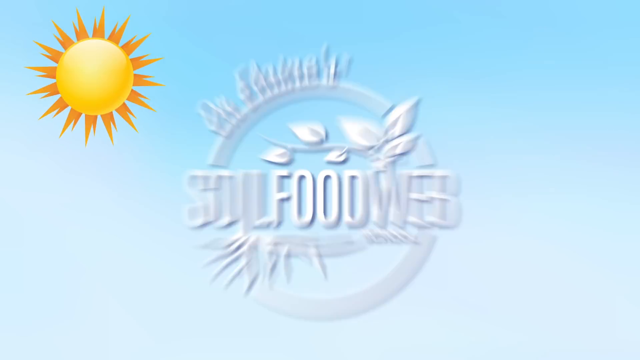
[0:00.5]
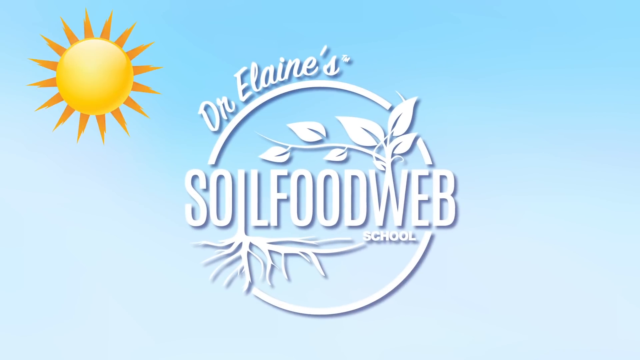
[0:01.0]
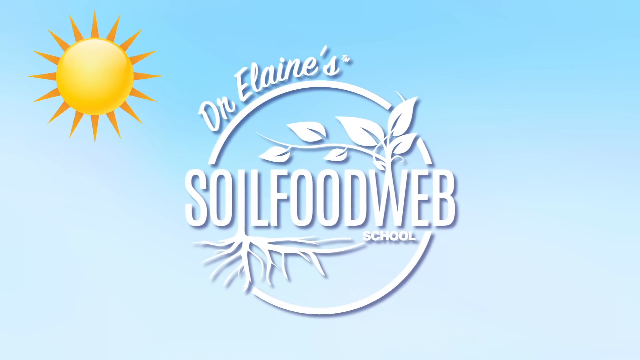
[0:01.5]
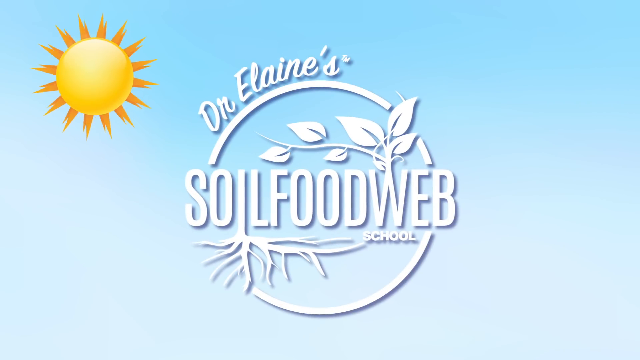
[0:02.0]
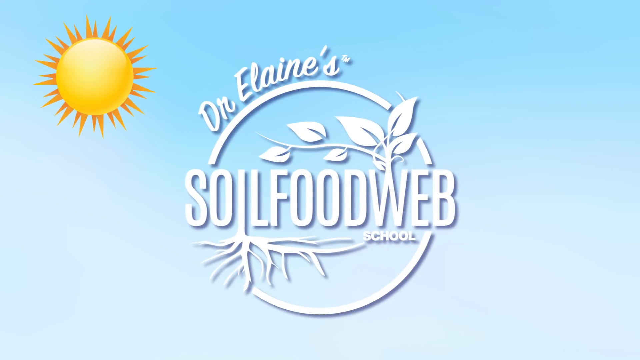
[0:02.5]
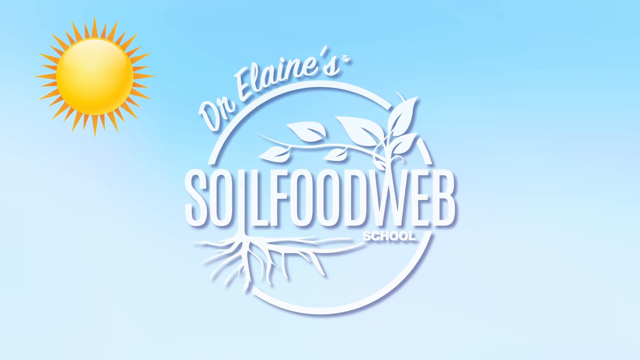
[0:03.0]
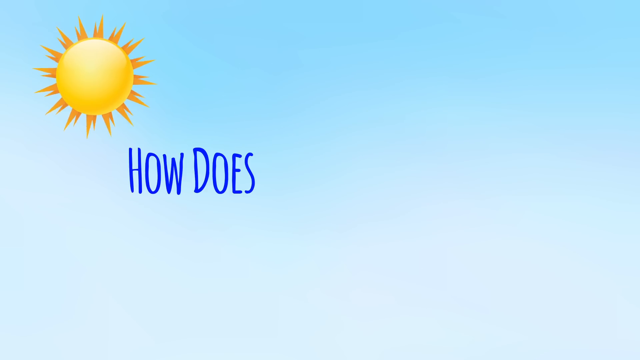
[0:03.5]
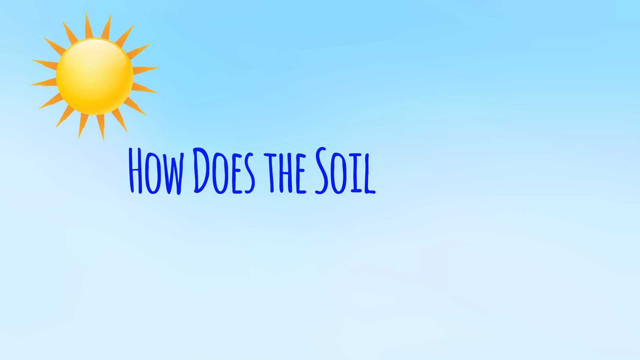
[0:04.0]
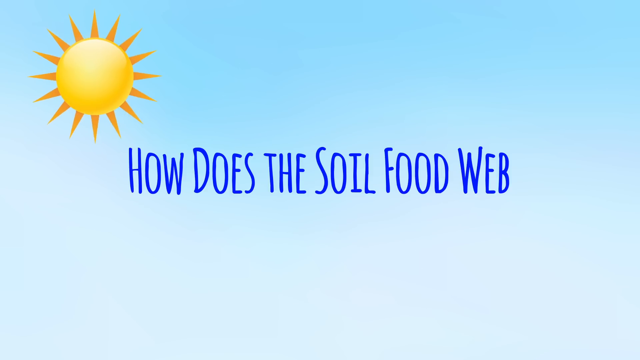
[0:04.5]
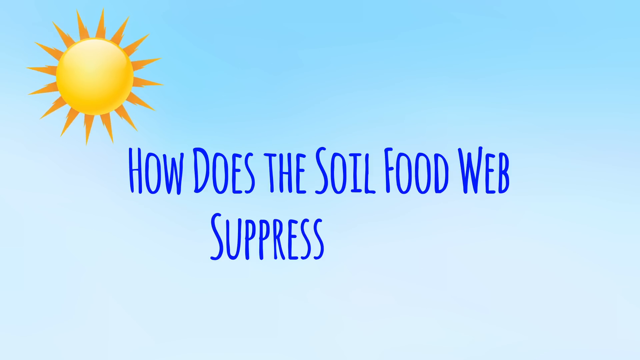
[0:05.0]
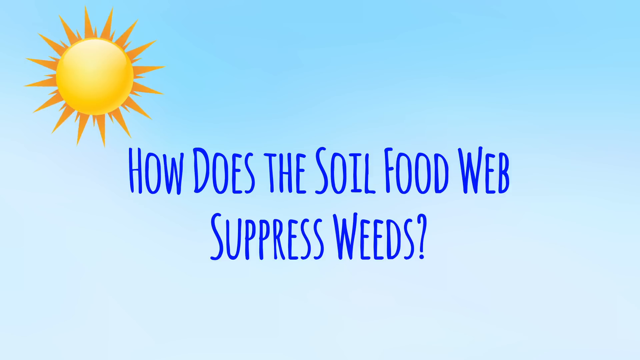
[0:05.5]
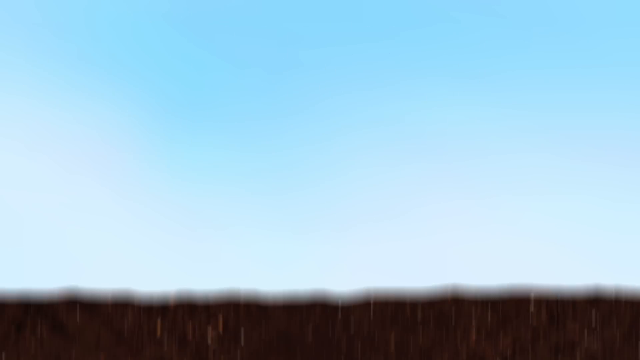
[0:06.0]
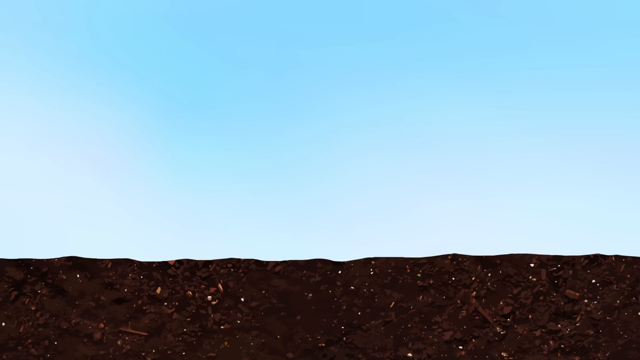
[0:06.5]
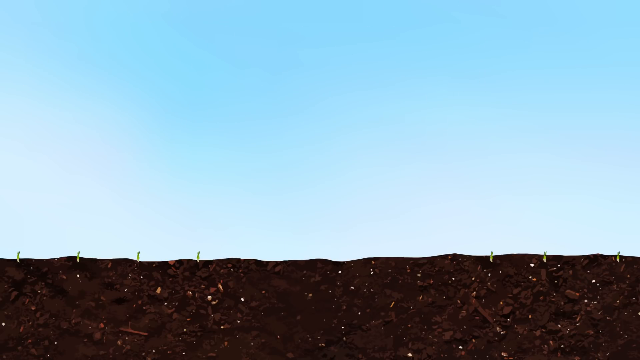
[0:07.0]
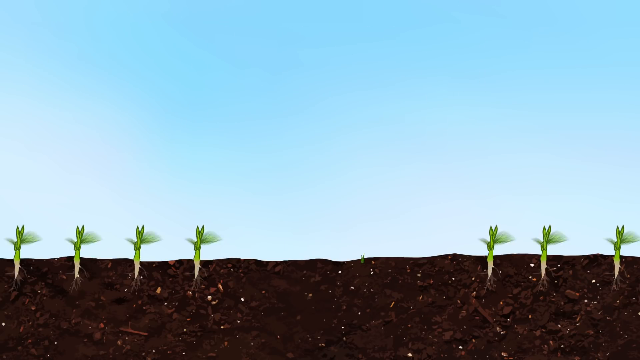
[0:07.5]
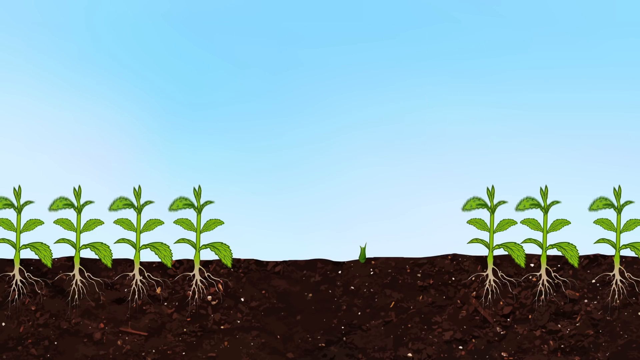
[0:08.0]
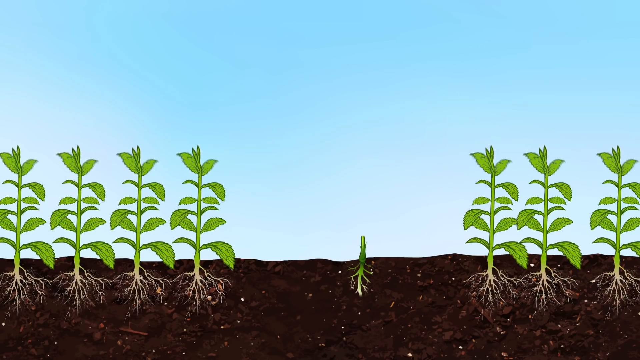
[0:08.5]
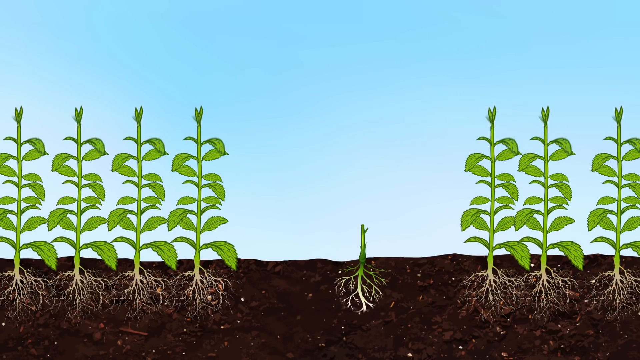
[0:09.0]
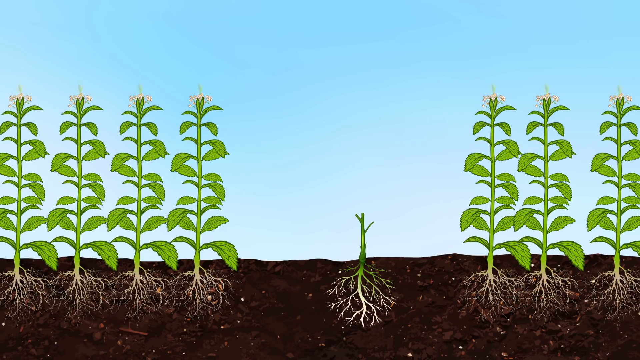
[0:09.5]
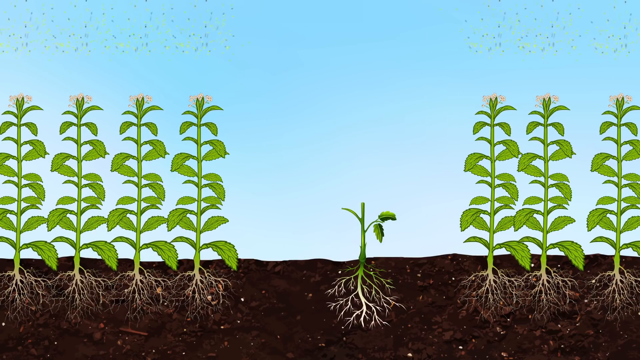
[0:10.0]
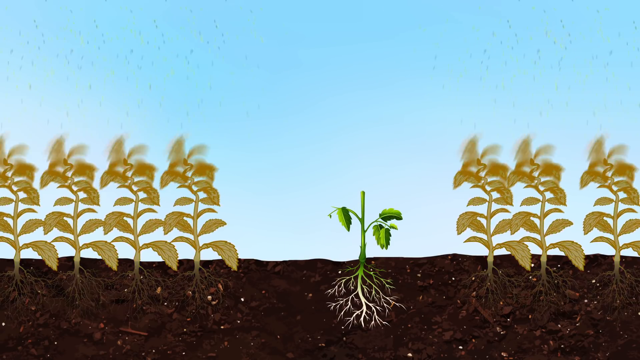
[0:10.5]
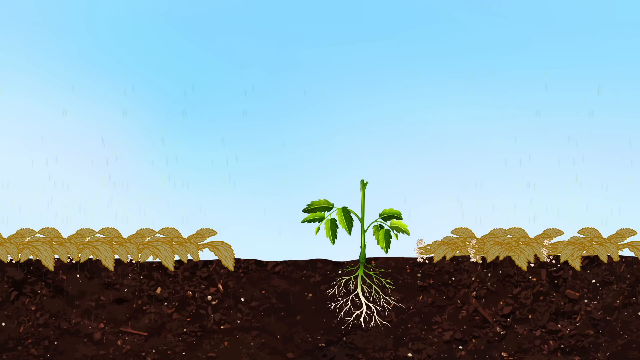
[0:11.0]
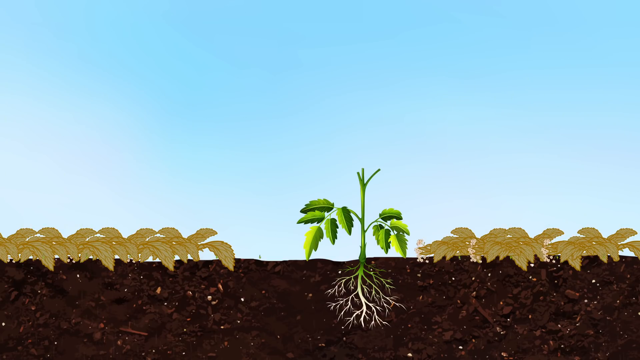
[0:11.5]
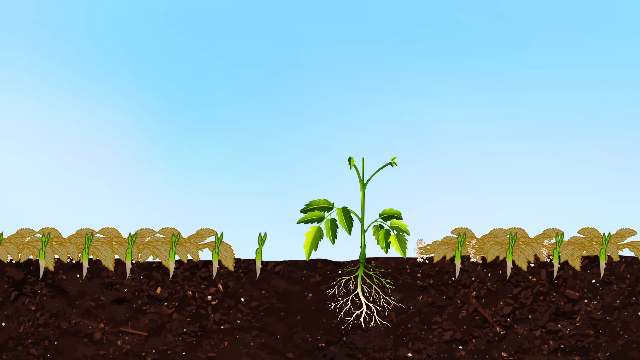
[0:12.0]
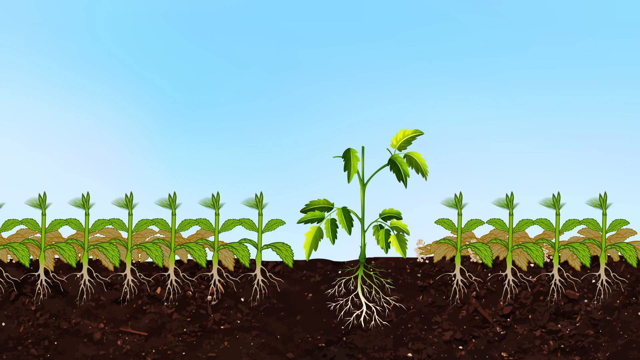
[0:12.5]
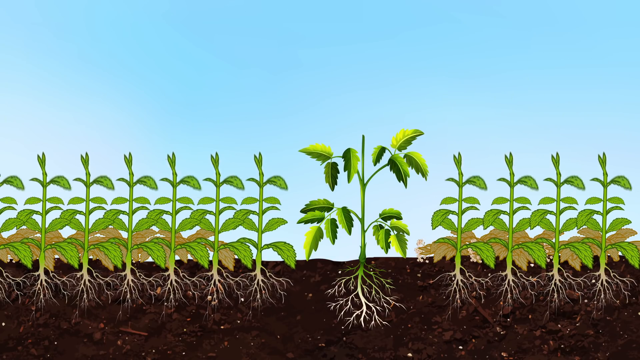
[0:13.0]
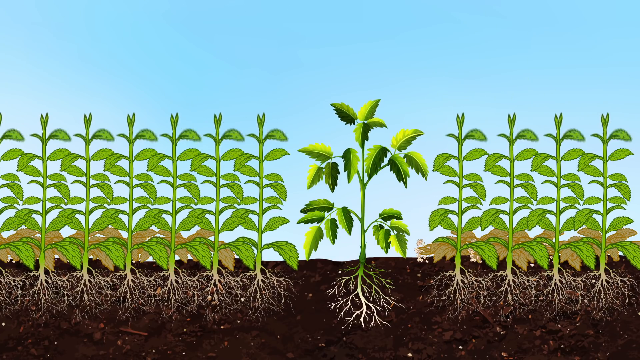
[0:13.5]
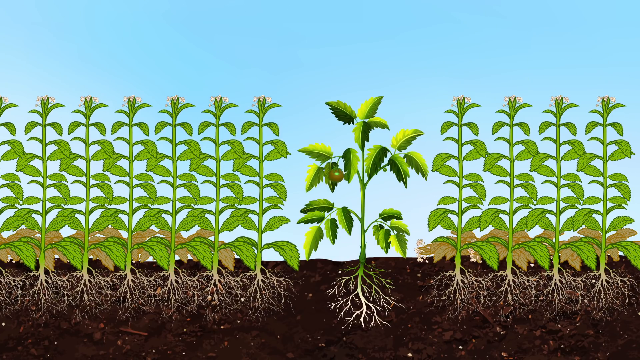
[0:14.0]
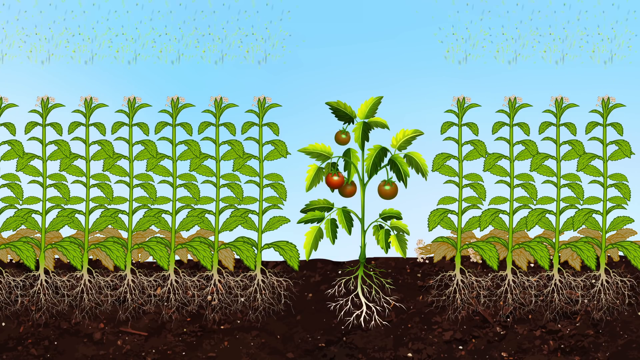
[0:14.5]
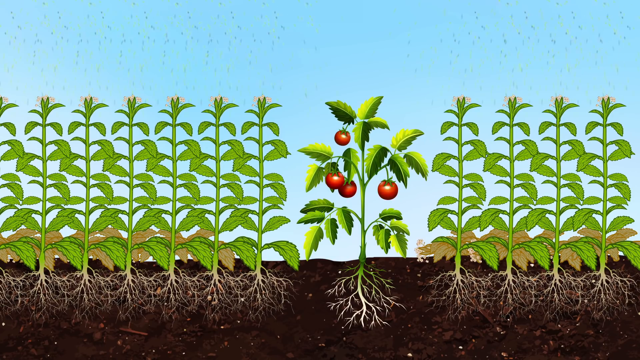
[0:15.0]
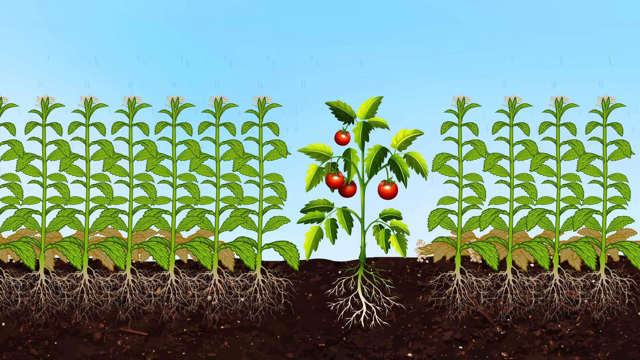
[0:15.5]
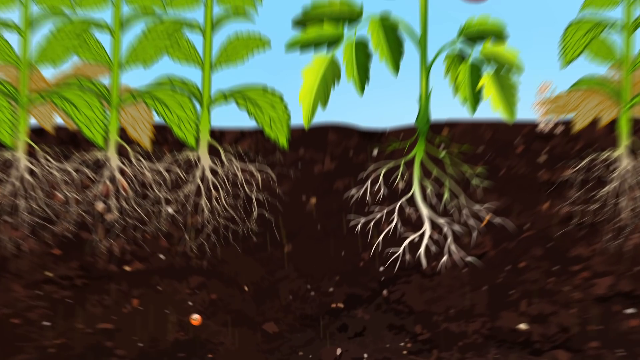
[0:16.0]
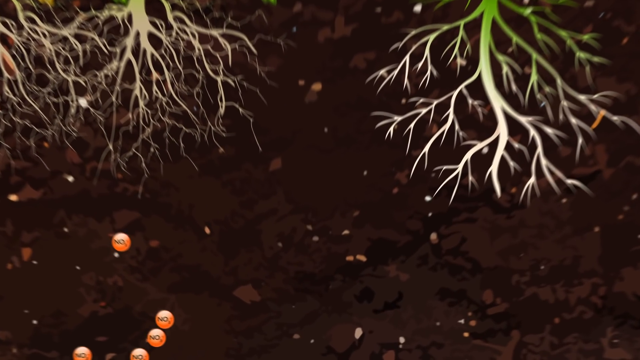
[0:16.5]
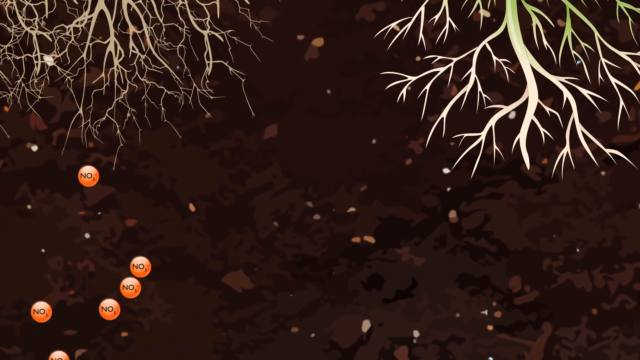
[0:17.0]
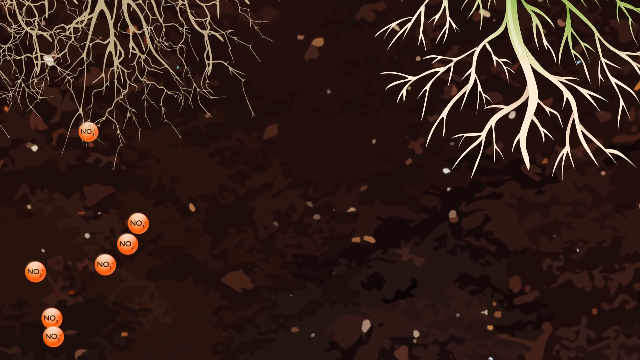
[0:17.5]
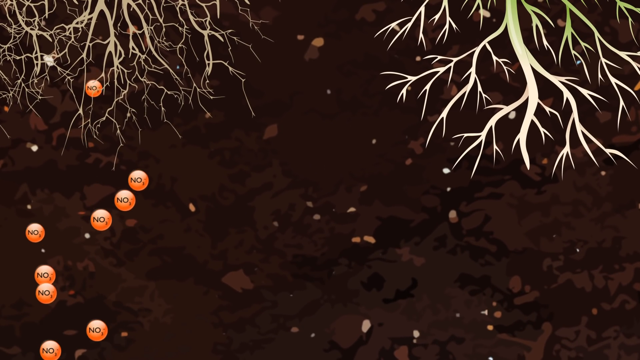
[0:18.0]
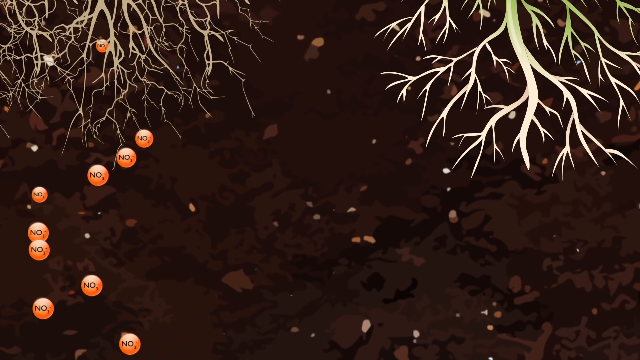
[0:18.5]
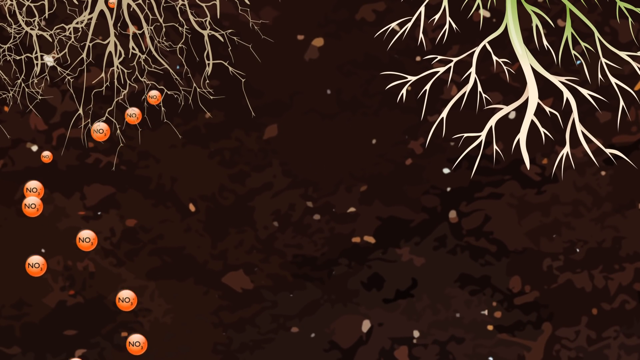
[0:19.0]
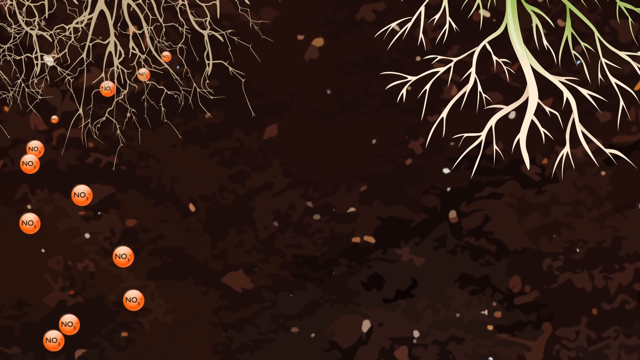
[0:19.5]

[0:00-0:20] The video opens on a light blue background with the words "Dr. Elaine's Soul Food Web School" in a white circle with some leaves above it, and a sun shining in the upper left corner. The words in the middle go down, and "How does the soil food web suppress weeds" pops up in blue writing. The scene then turns to what appears to be soil at the bottom of the screen, with plants growing upward and a large plant in the very middle. A more close-up image shows this plant and its roots, and the plant has what look like red tomatoes hanging from it. Brown circles come up in the soil and seem to be going up into the roots; the circles have the letters "NO" on them.